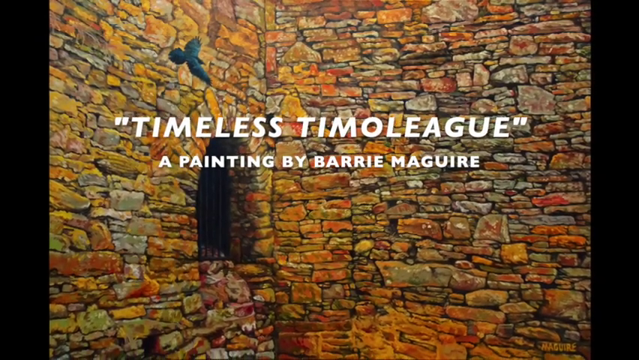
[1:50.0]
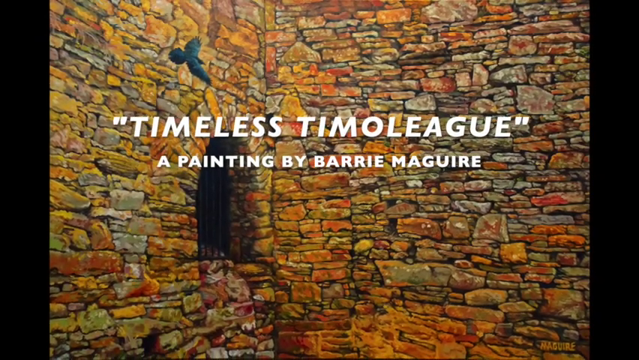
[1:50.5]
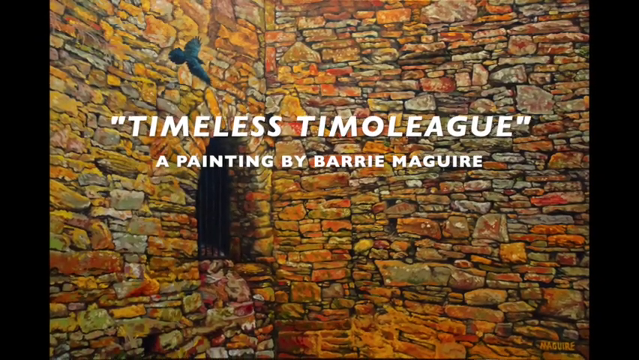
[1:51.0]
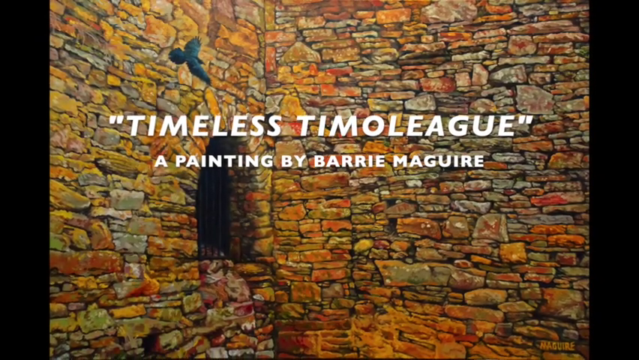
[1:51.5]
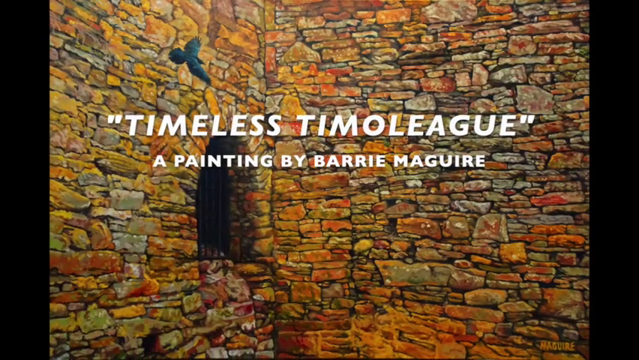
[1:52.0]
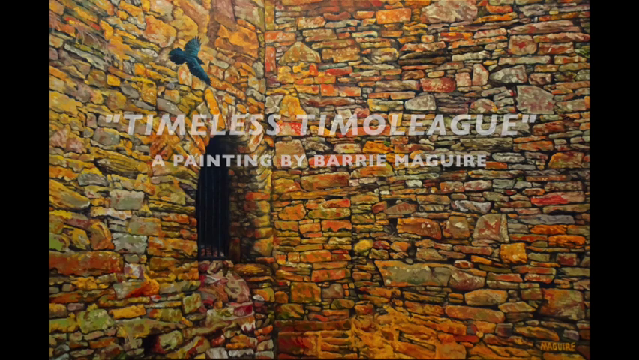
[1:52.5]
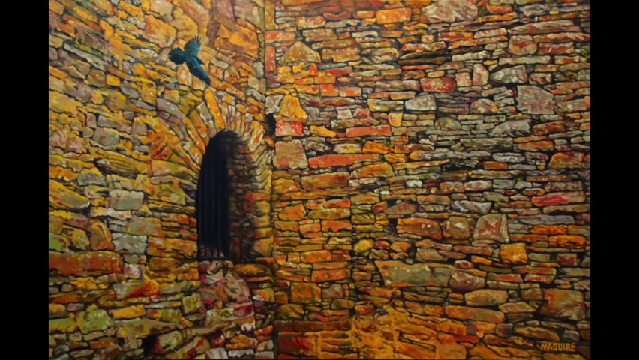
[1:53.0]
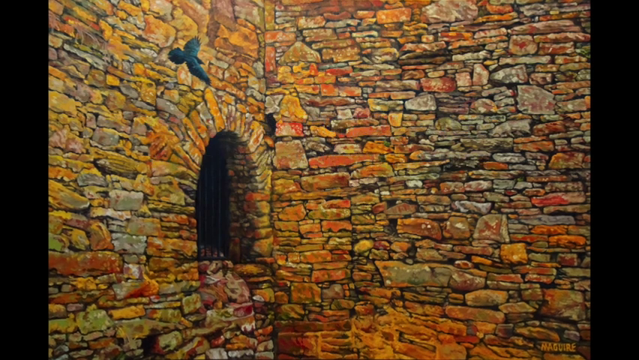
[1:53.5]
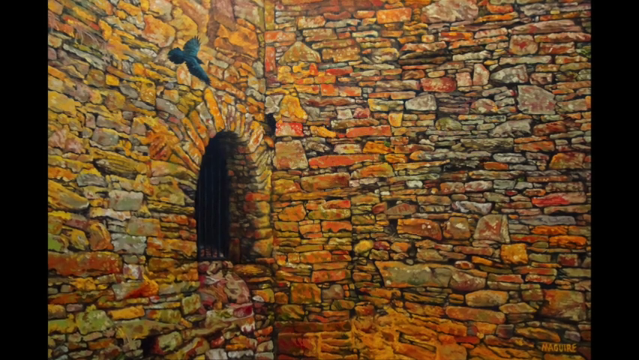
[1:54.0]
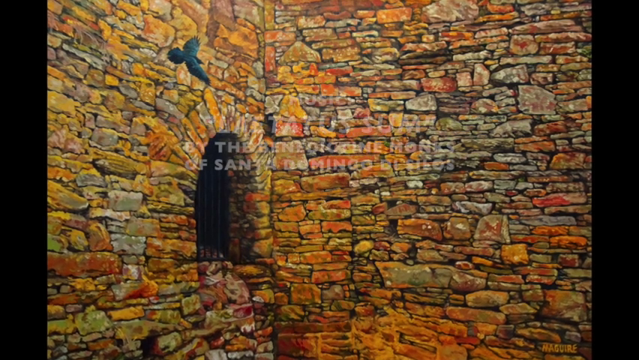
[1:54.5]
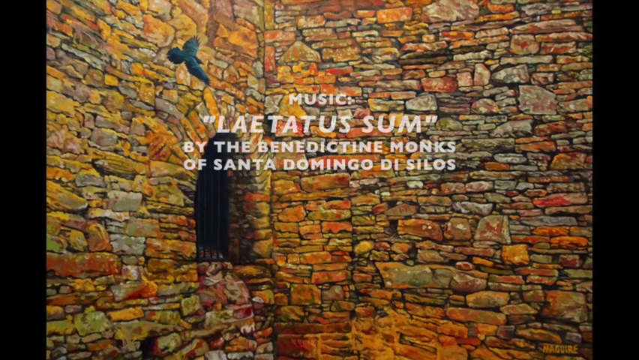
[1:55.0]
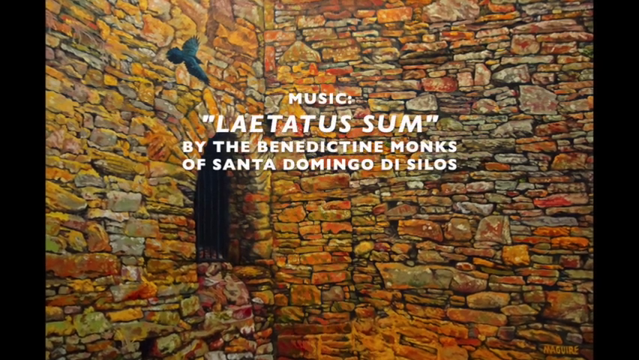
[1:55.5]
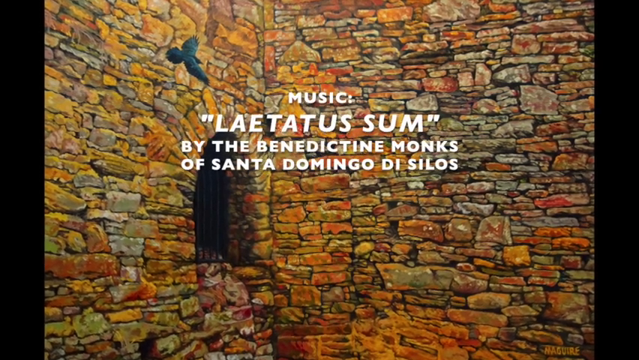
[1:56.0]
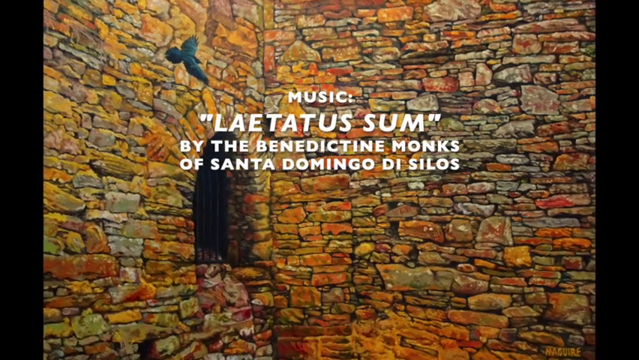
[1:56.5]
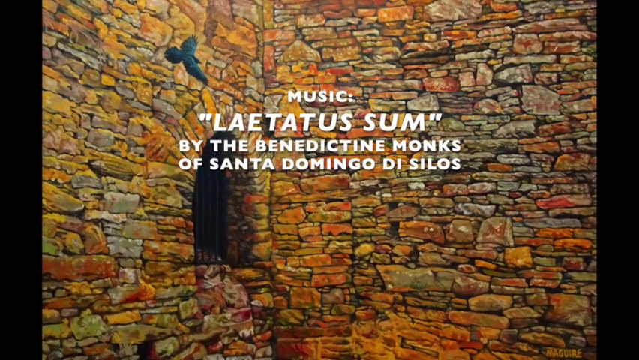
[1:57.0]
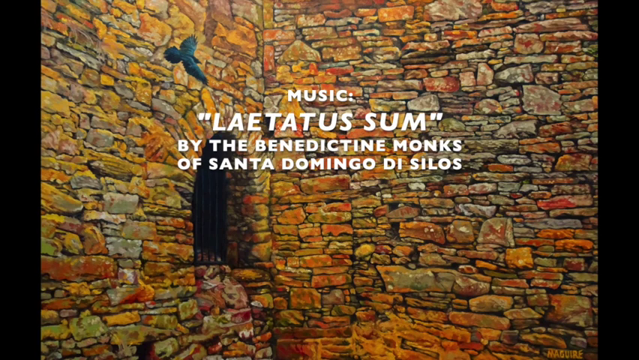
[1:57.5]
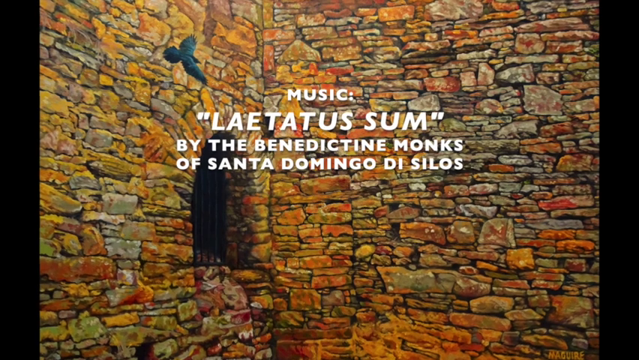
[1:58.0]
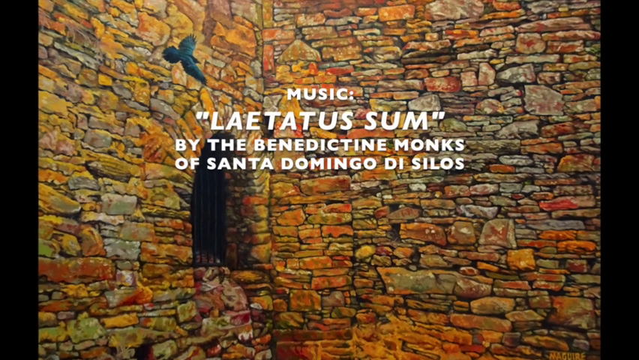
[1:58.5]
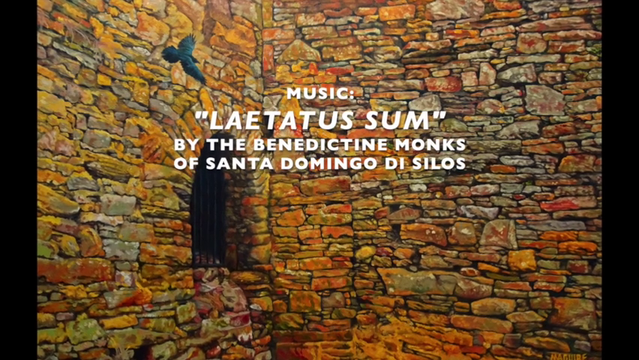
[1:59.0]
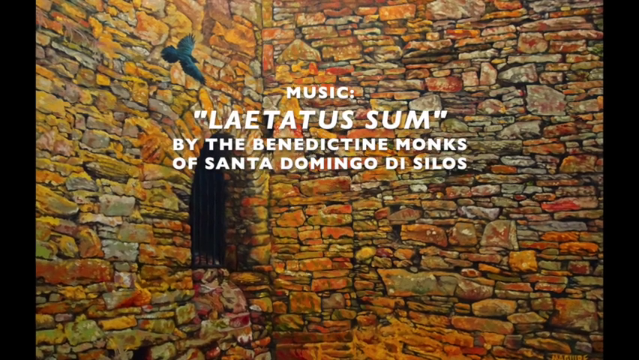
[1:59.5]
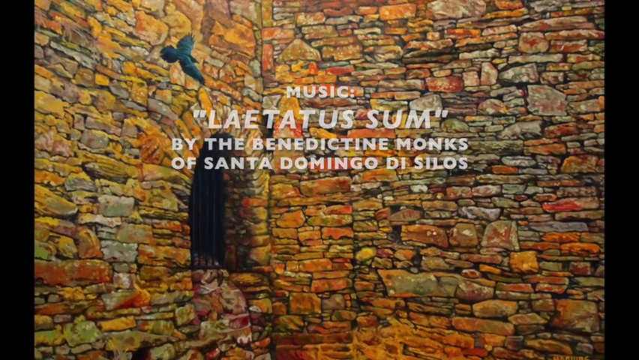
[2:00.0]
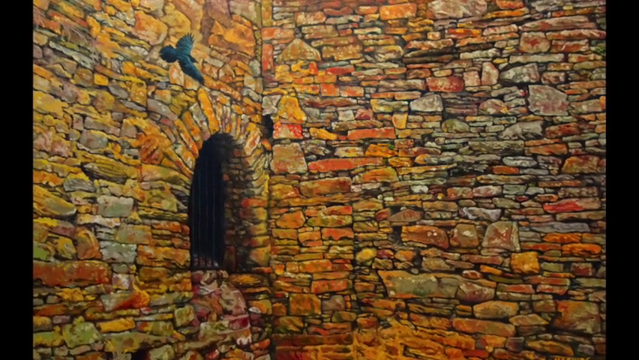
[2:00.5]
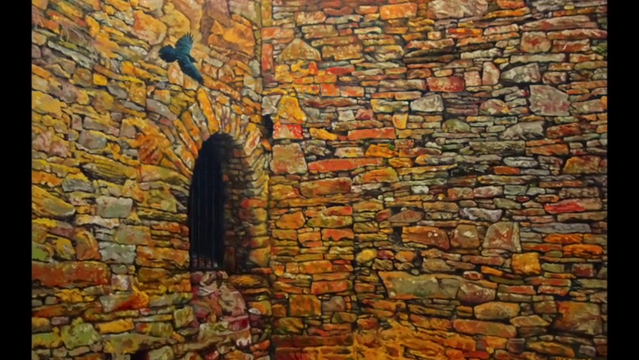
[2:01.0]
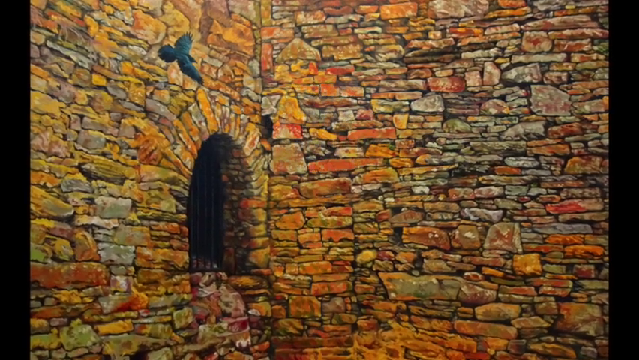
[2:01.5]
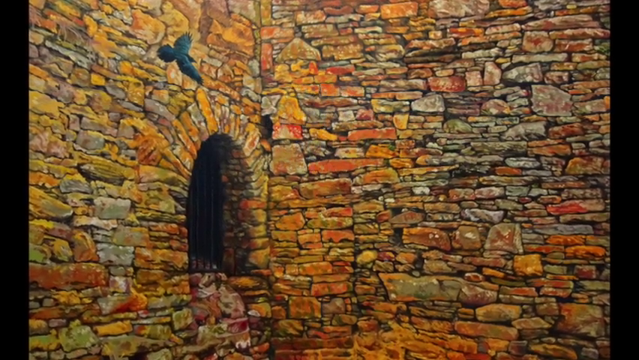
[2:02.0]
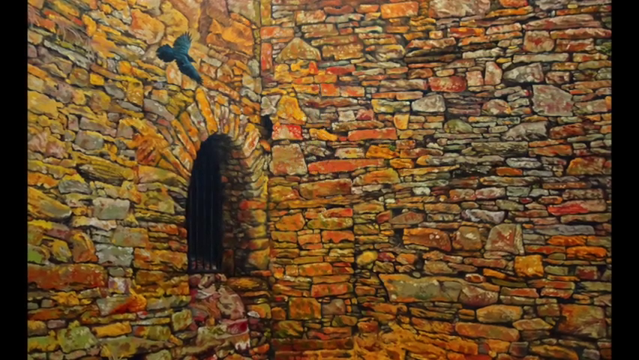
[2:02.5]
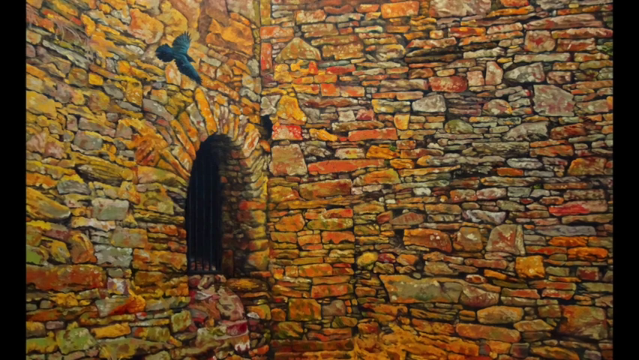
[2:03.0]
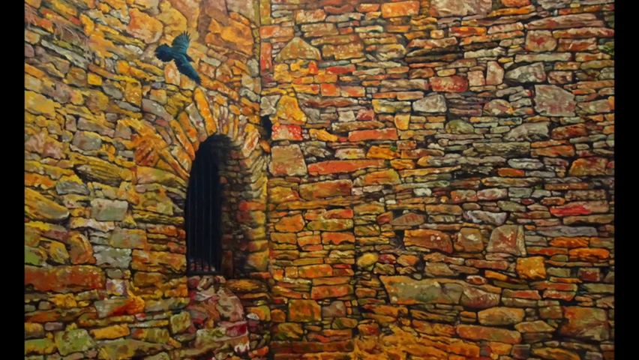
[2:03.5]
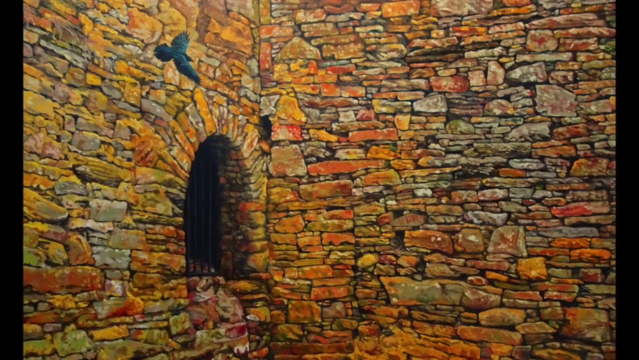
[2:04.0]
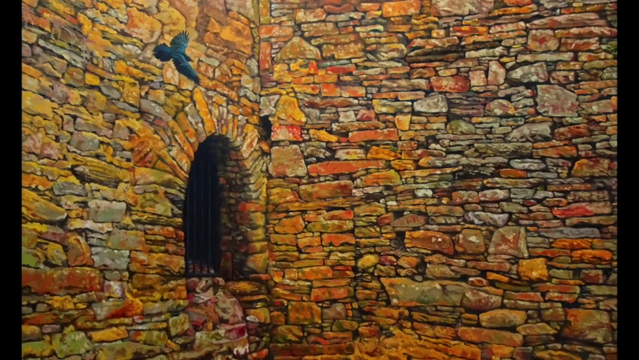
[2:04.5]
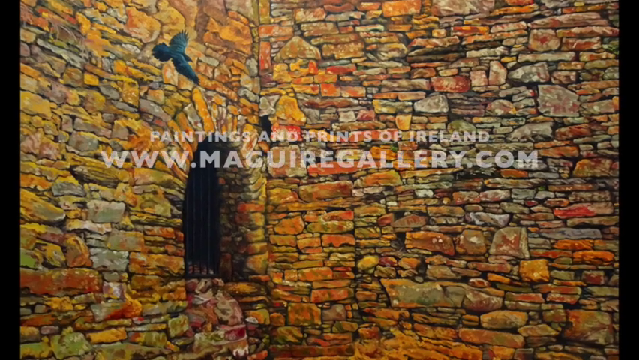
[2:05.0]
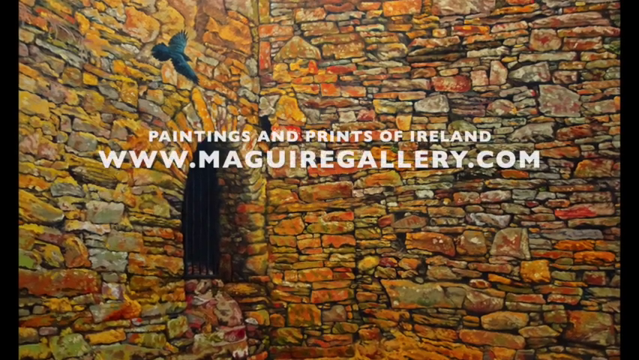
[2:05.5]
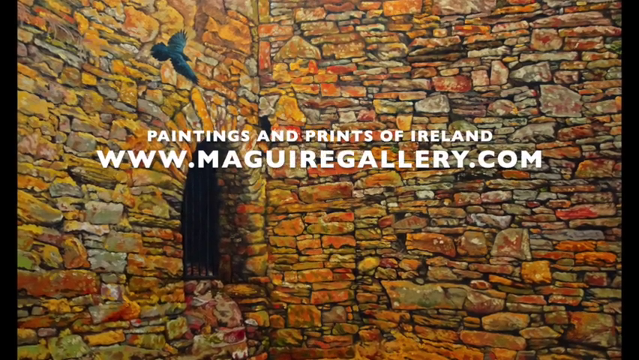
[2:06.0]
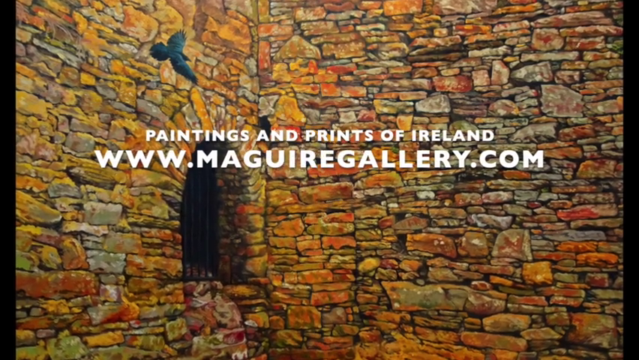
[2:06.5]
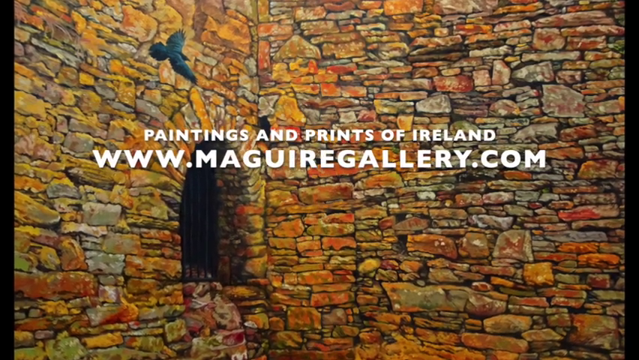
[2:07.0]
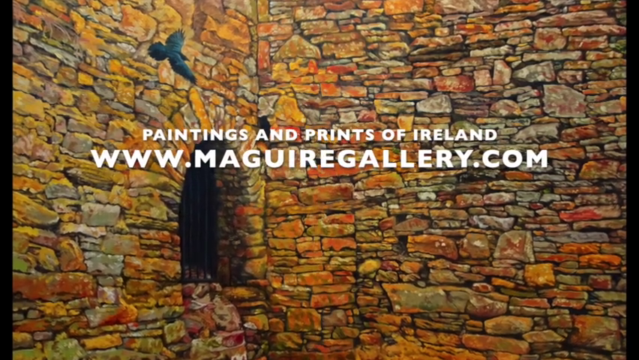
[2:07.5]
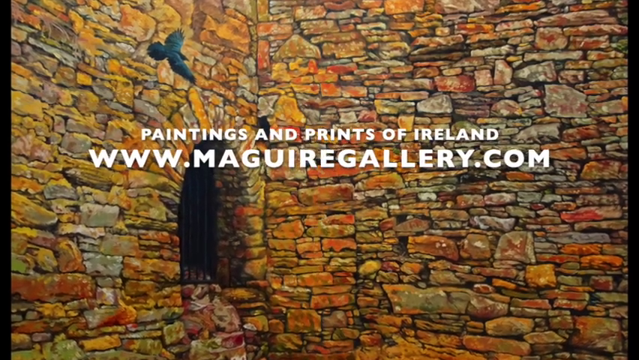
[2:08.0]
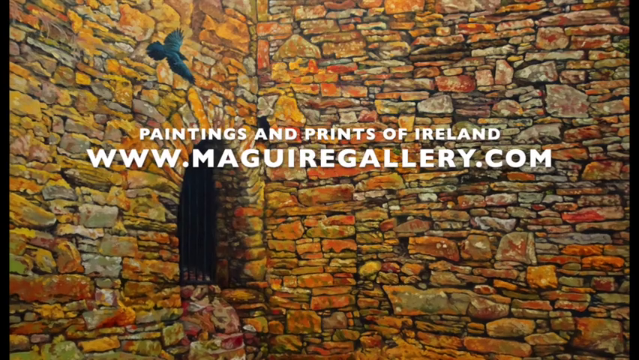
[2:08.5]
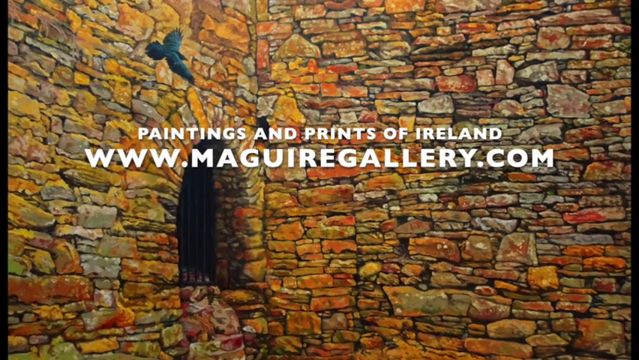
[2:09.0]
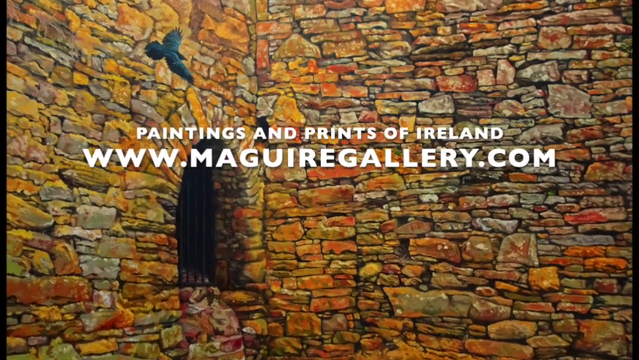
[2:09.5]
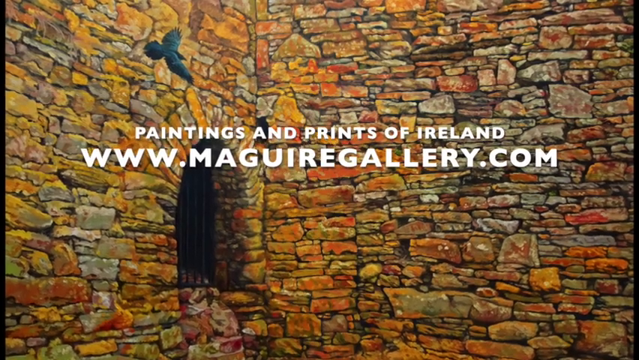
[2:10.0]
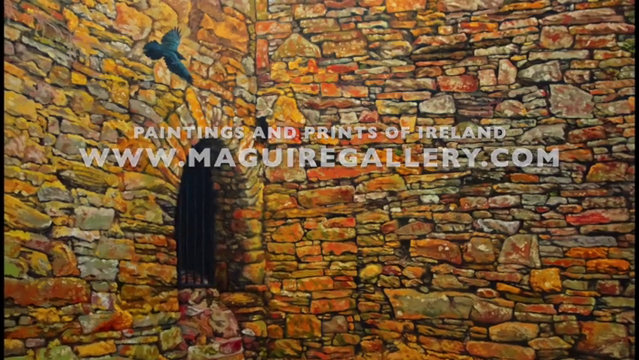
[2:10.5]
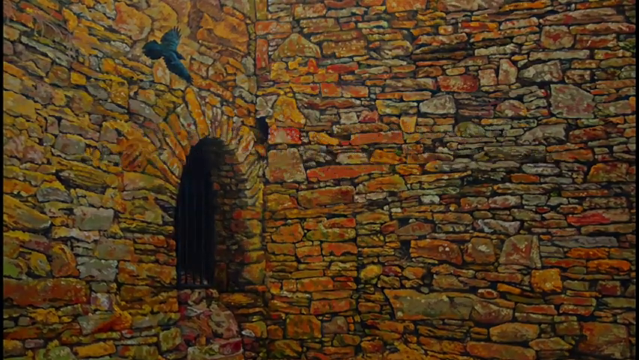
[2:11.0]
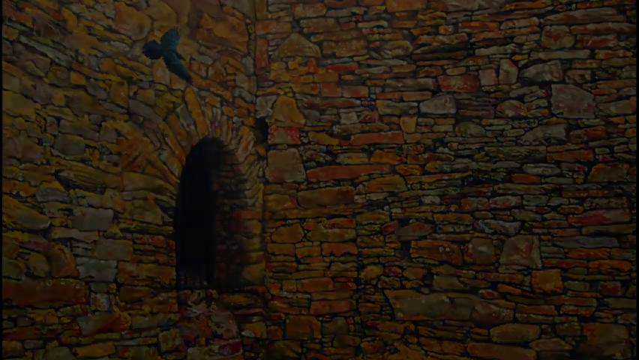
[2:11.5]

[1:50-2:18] The painting "Timeless Timoleague" by Barrie McGuire is shown, with cobblestones in reds, yellows and tans and black and brown lines between them. On the left side is a small opening or window with black poles forming a grate that blocks it. Up on the left side is a black crow. The title "Timeless Timoleague" is in white writing, in double quotes. Next, a credit appears for music: LAETATUS SUM by the Benedictine Monks of San Domingo de Silos. The video ends on the picture that served as the backdrop for the poem.